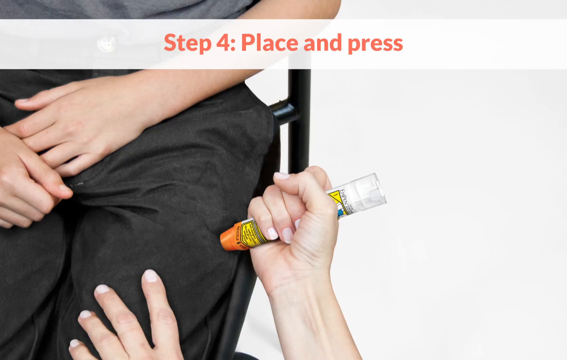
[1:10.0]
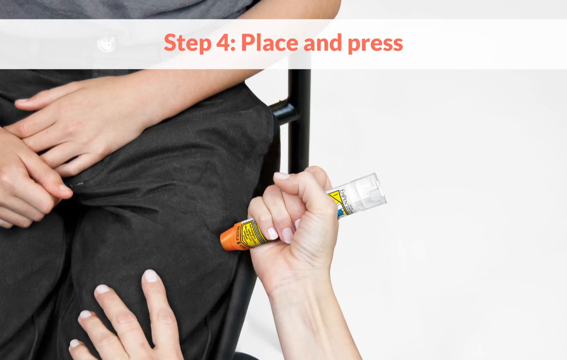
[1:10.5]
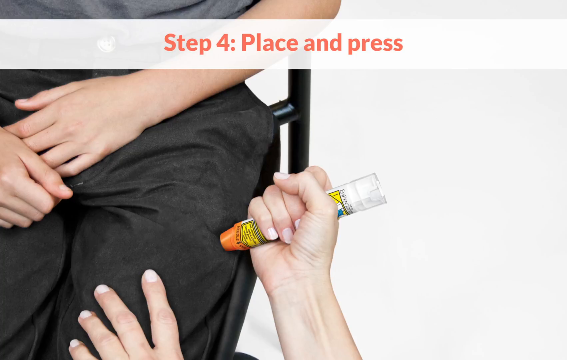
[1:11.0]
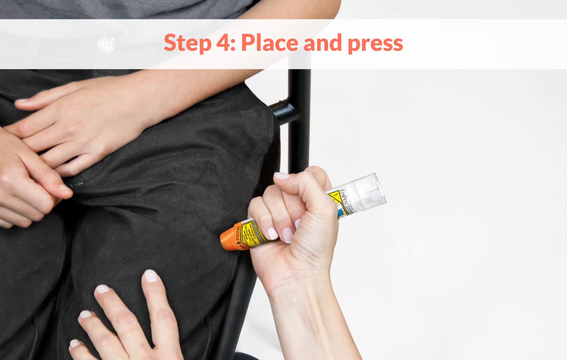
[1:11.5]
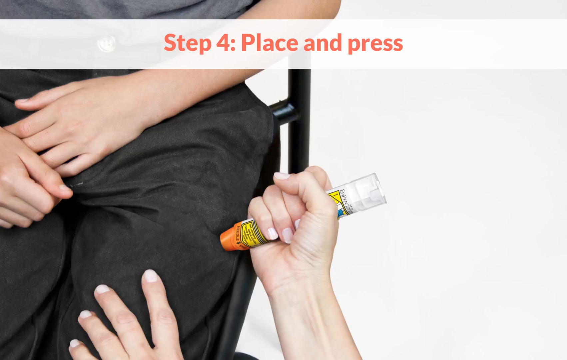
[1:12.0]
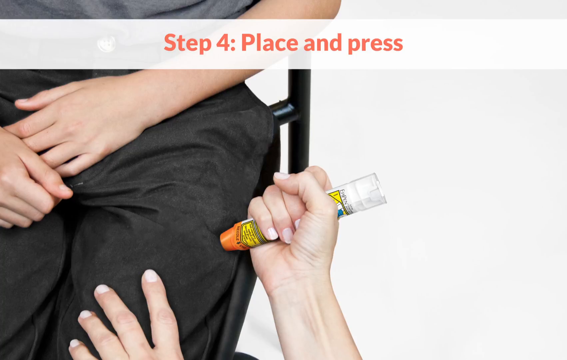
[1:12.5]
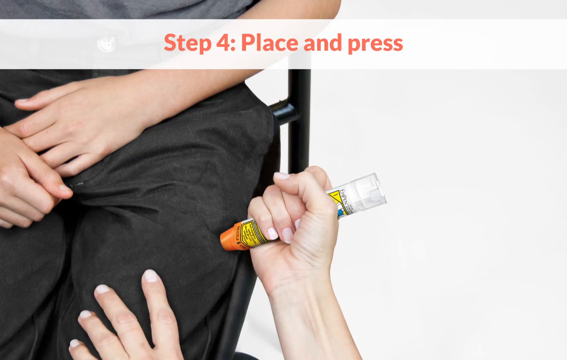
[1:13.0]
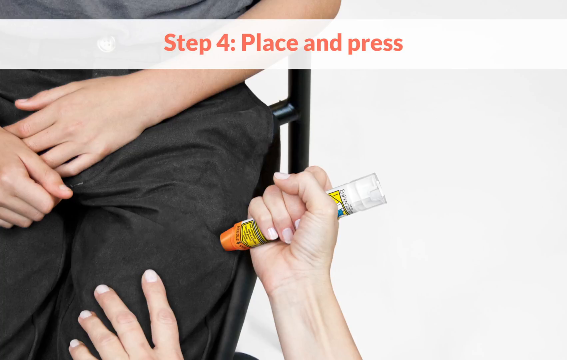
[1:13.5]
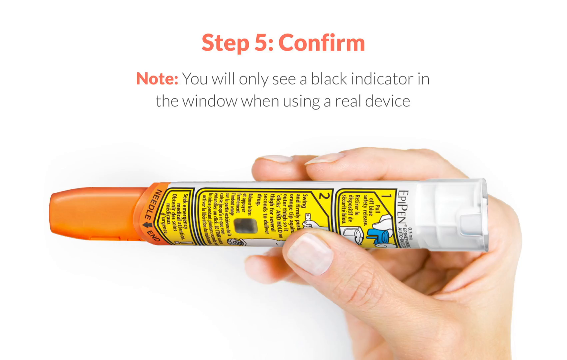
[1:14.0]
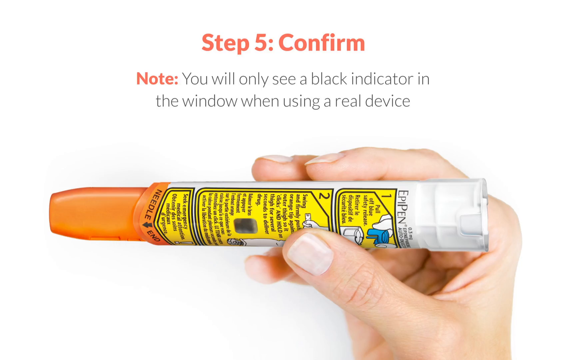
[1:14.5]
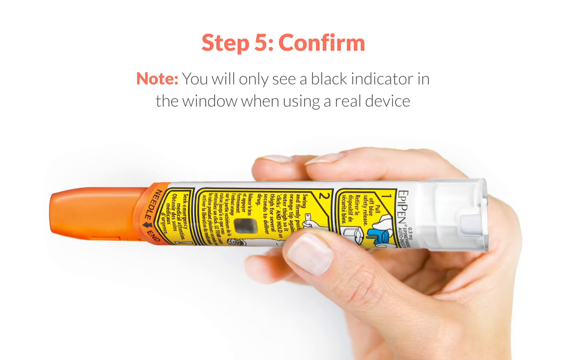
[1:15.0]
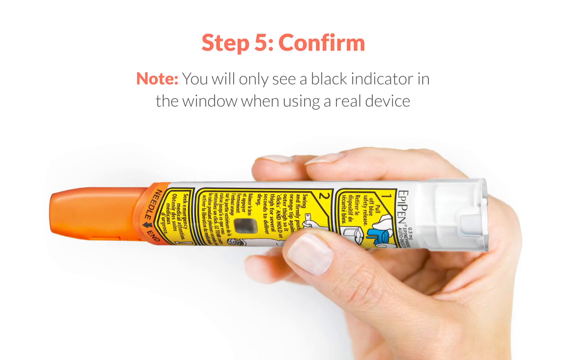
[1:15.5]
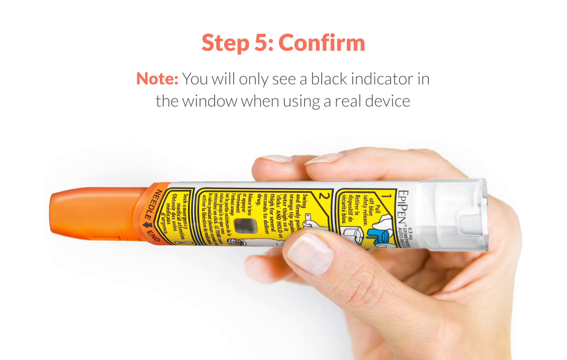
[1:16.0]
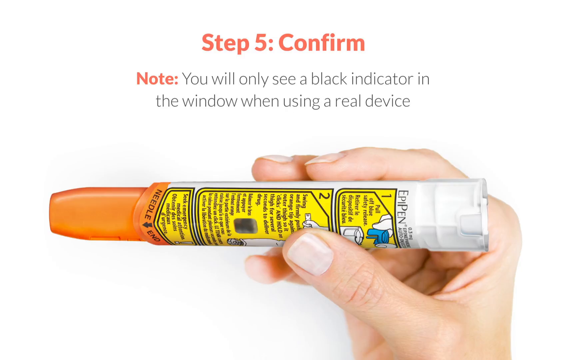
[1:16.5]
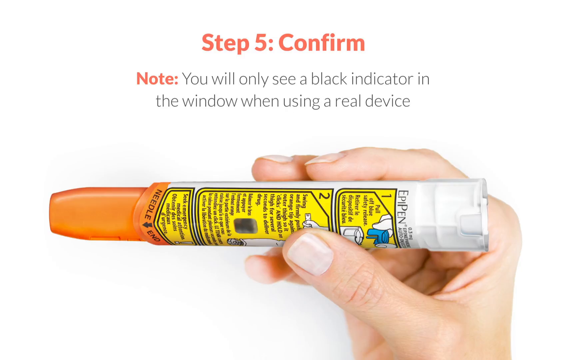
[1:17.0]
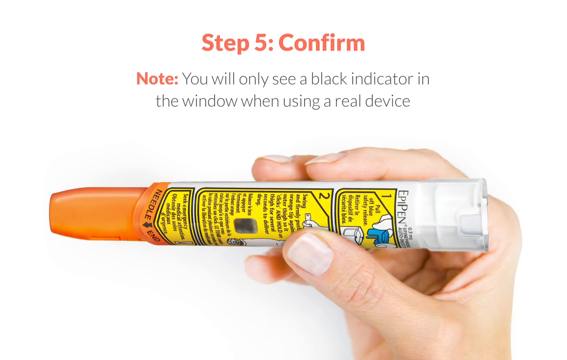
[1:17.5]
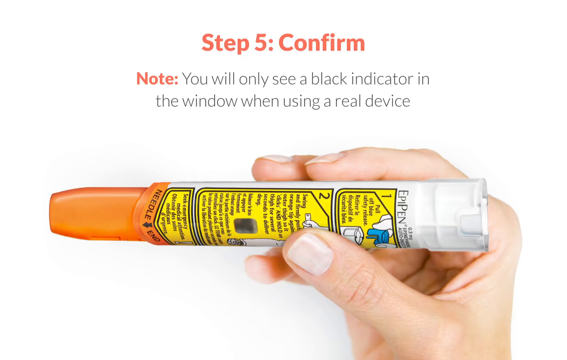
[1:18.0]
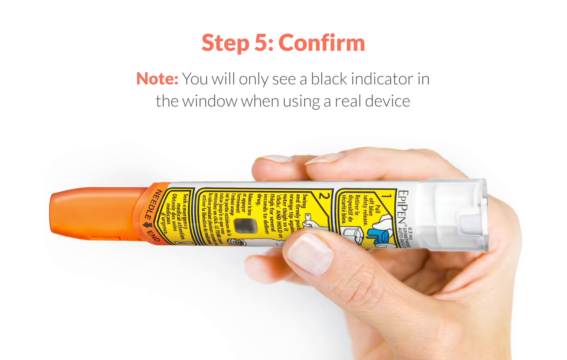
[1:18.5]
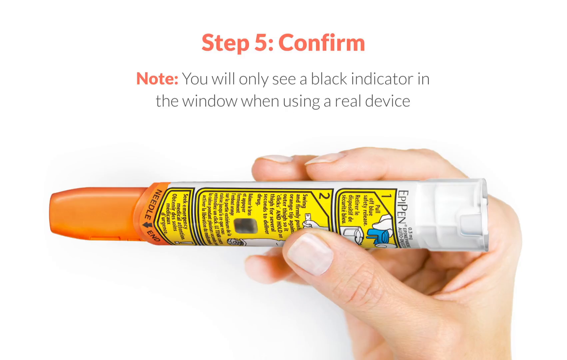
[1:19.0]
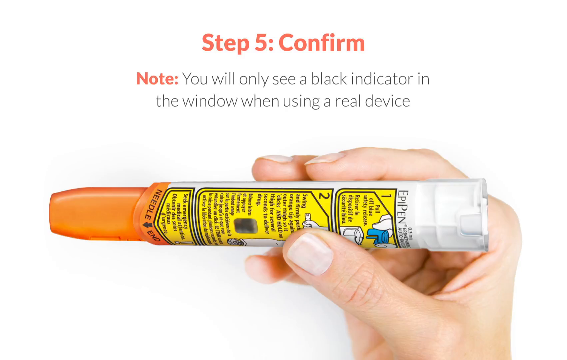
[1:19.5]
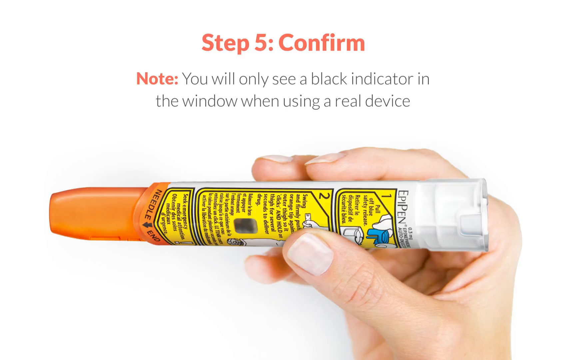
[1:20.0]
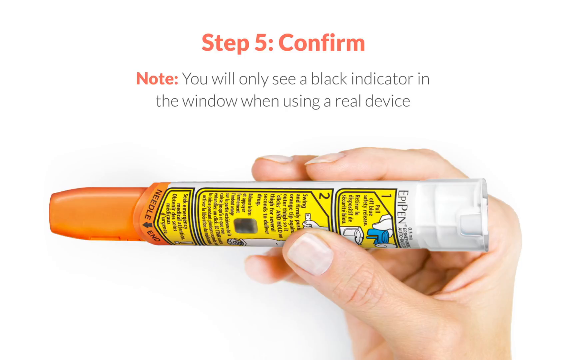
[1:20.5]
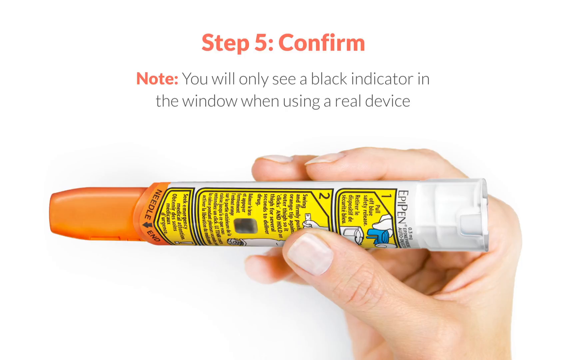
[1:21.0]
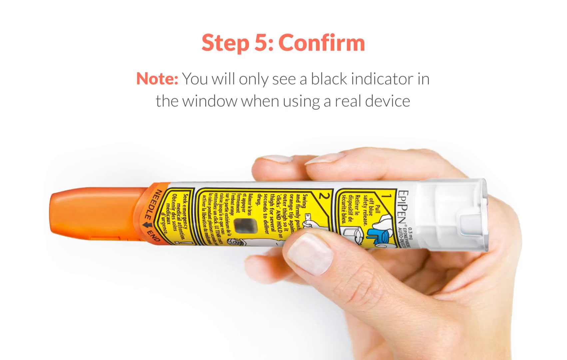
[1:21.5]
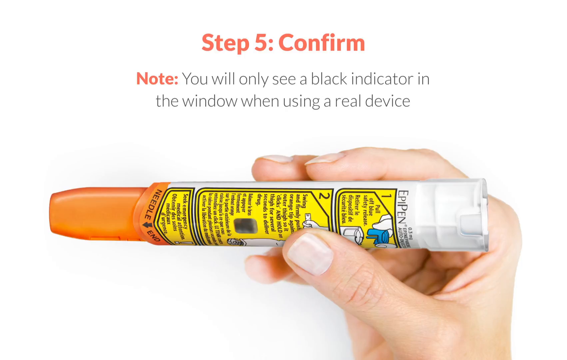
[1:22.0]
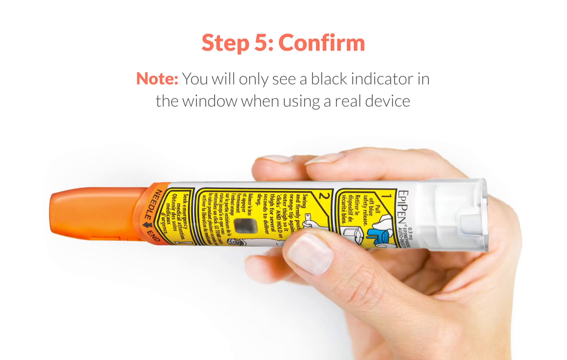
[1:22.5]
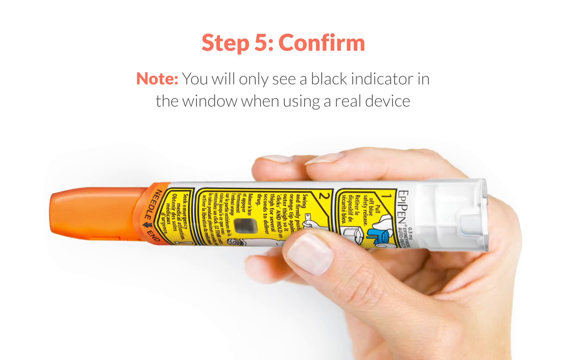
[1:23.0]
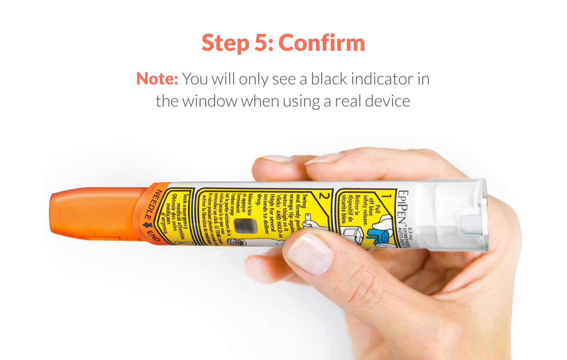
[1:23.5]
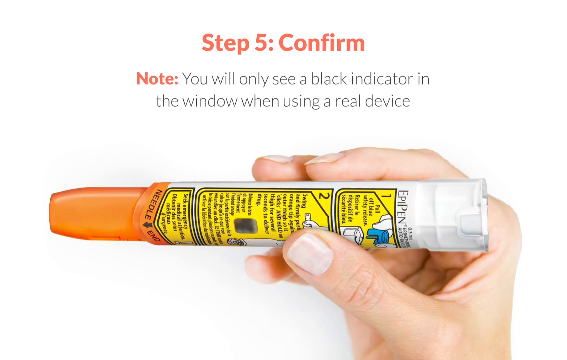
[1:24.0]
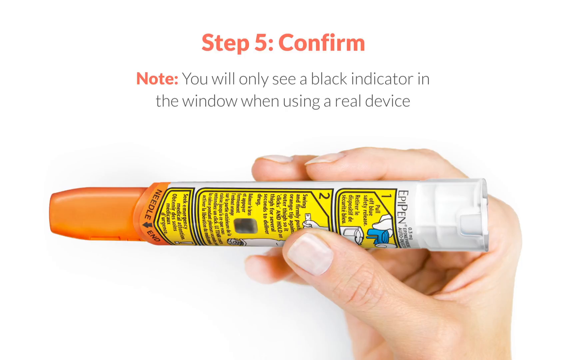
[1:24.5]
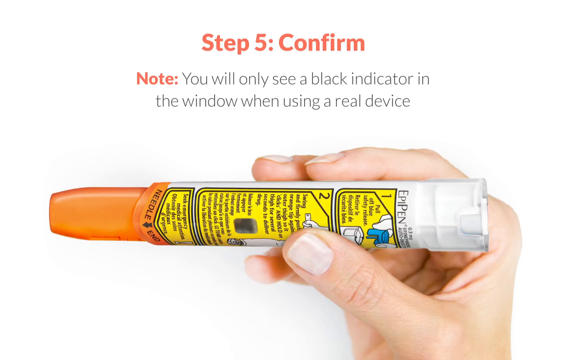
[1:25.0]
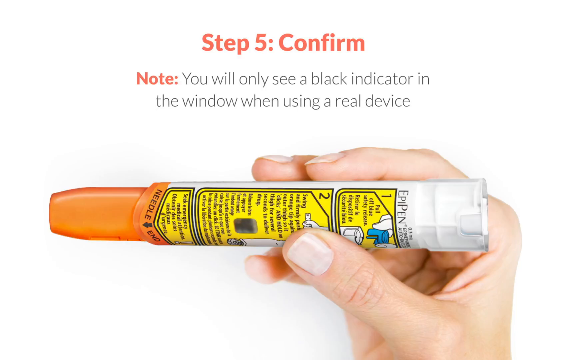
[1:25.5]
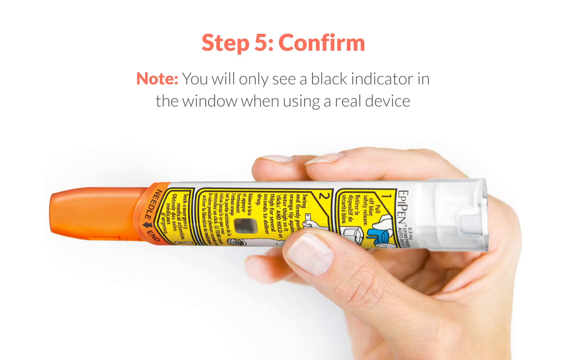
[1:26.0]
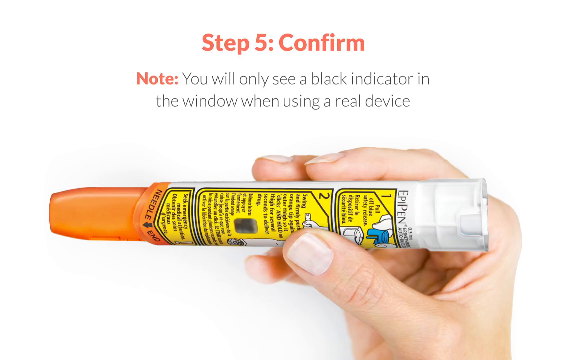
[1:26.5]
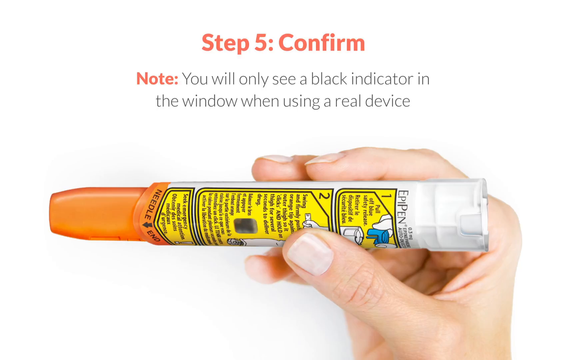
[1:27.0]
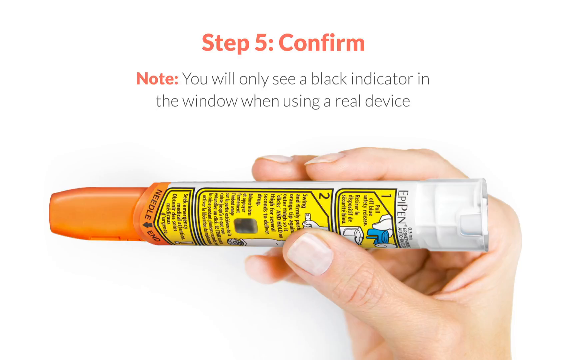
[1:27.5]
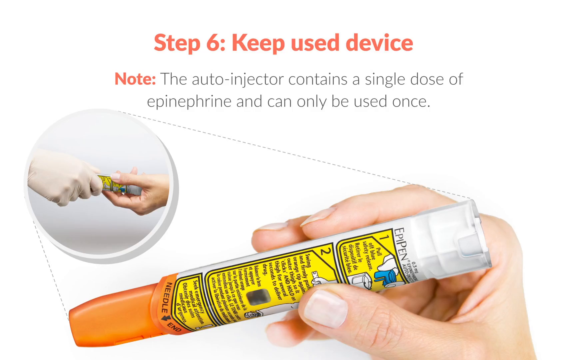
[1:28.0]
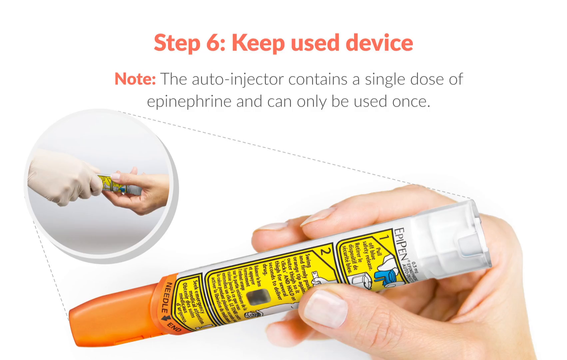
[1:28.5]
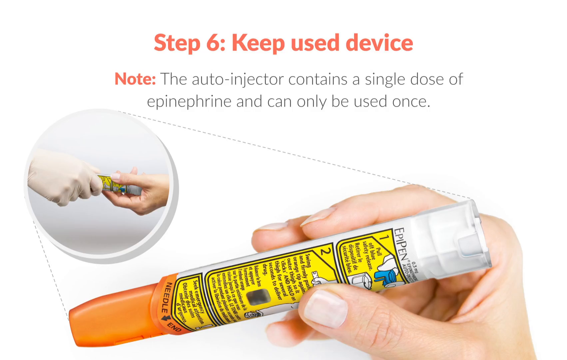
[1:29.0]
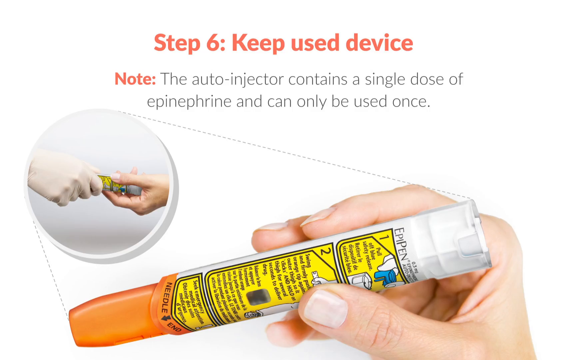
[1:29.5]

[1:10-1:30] The video moves to step five, "confirm." Below it a note reads "you will see only a black indicator in the window when using a real device." The EpiPen is still held in the right hand, but now between the first two fingers and the thumb instead of in a fist. It is turned so the instructions are visible, and roughly halfway down the pen is a very small window that looks to be filled with black ink, apparently indicating that the EpiPen has been used. After a few seconds on this step, the video moves to step six, "keep the used device," with a note that reads "the auto injector contains a single dose of epinephrine and can only be used once."